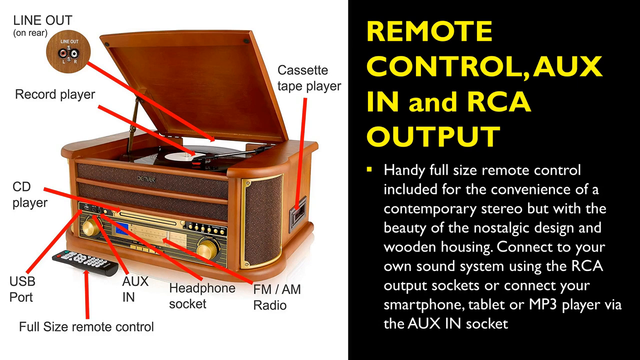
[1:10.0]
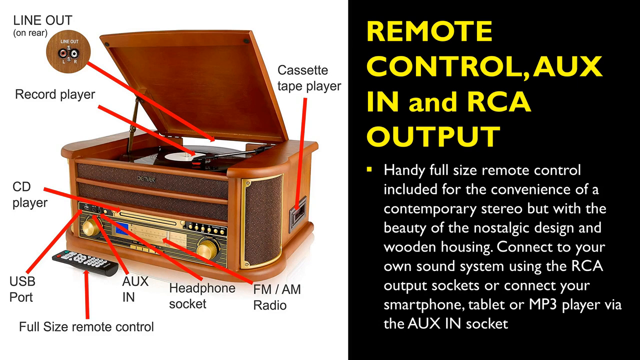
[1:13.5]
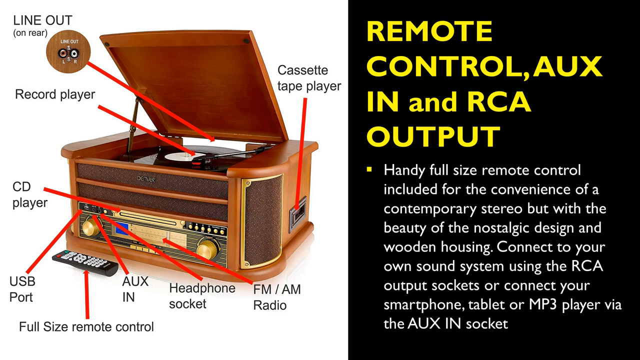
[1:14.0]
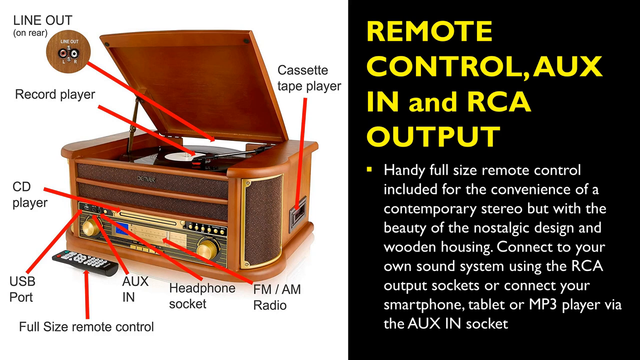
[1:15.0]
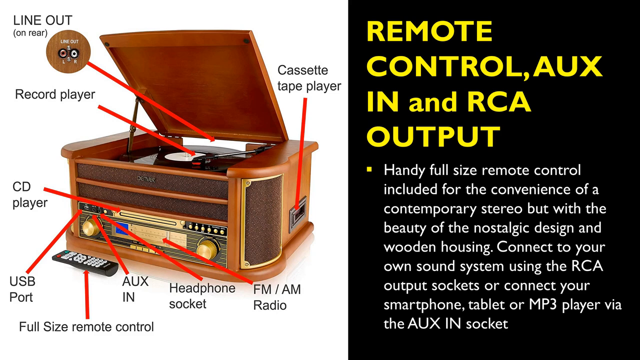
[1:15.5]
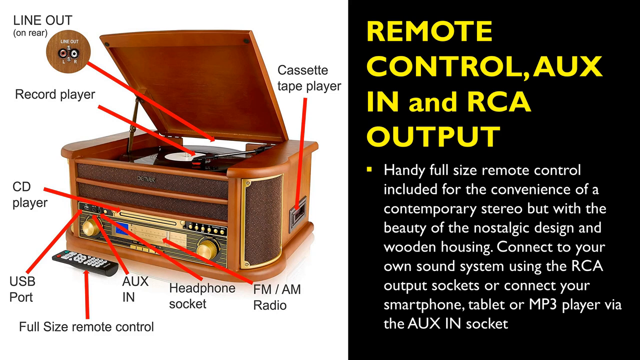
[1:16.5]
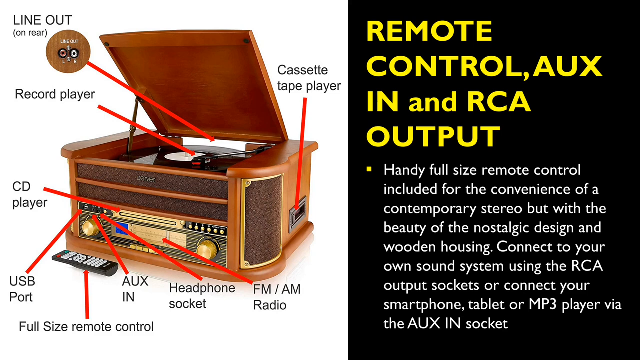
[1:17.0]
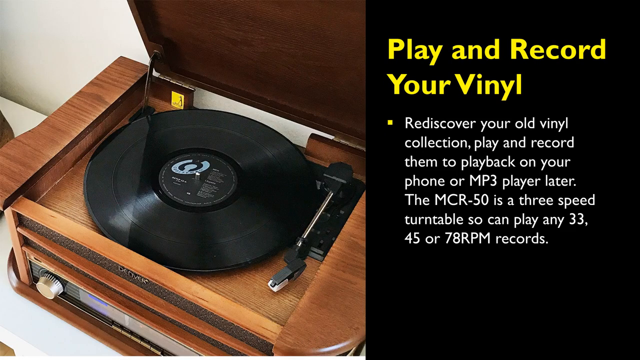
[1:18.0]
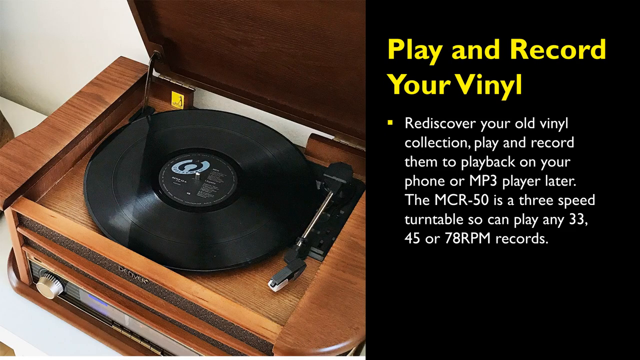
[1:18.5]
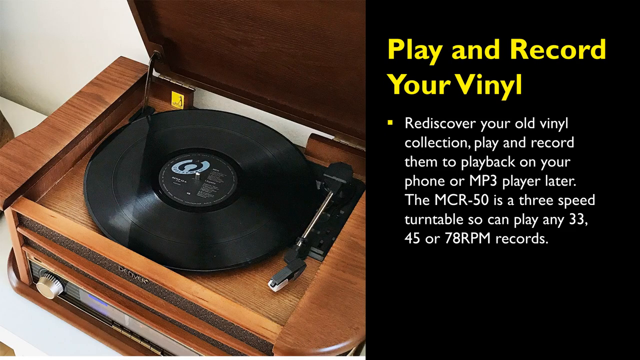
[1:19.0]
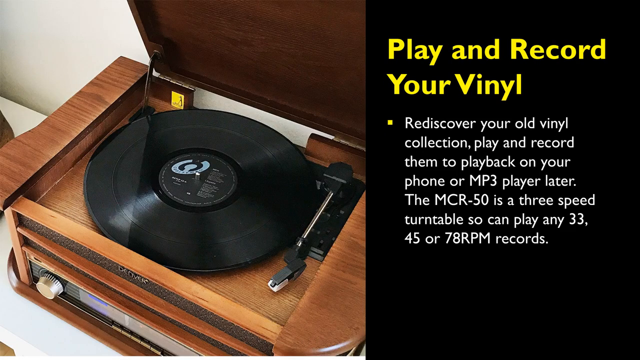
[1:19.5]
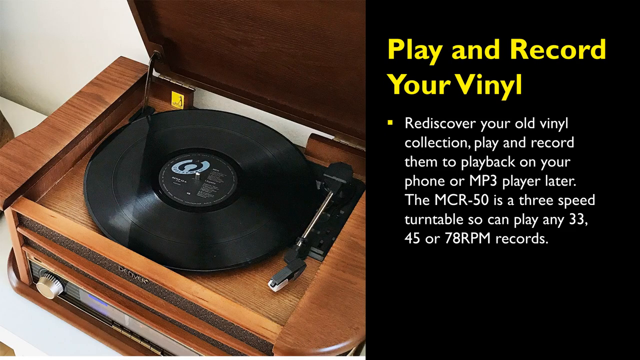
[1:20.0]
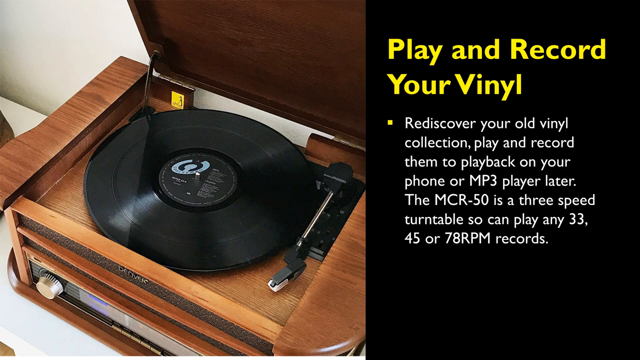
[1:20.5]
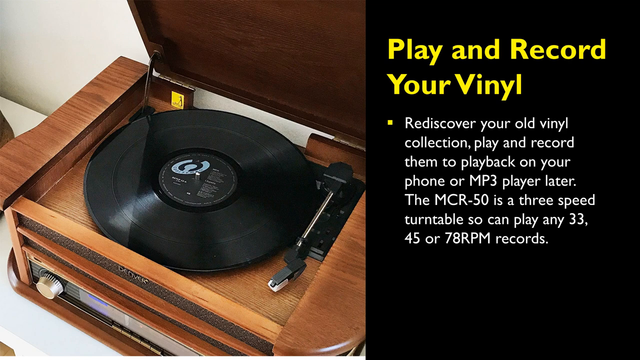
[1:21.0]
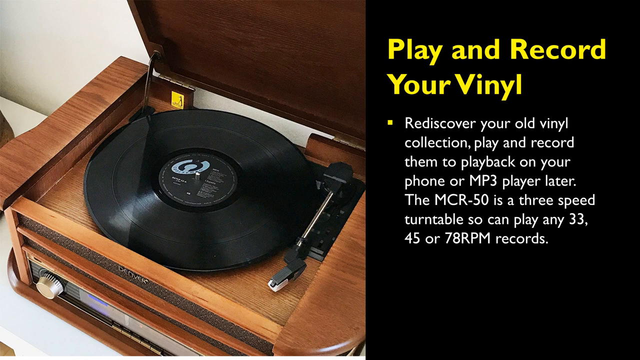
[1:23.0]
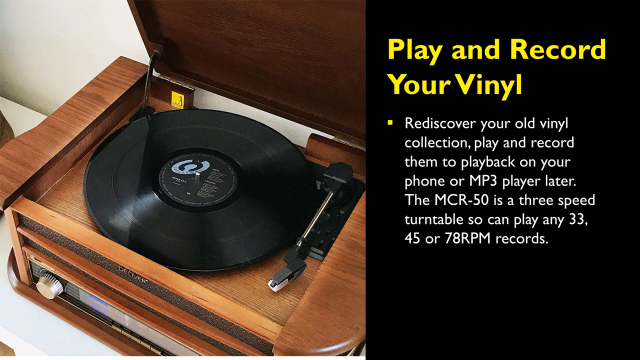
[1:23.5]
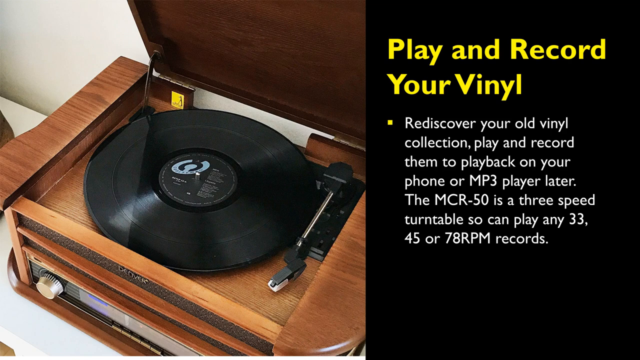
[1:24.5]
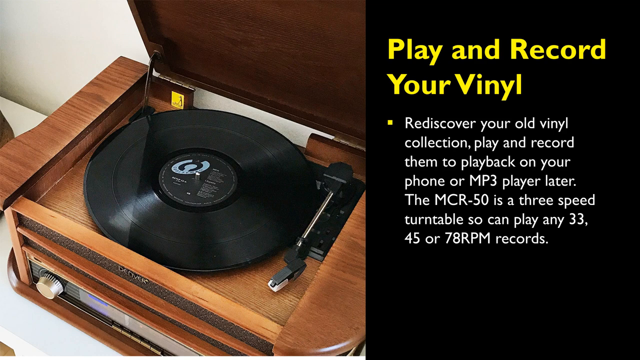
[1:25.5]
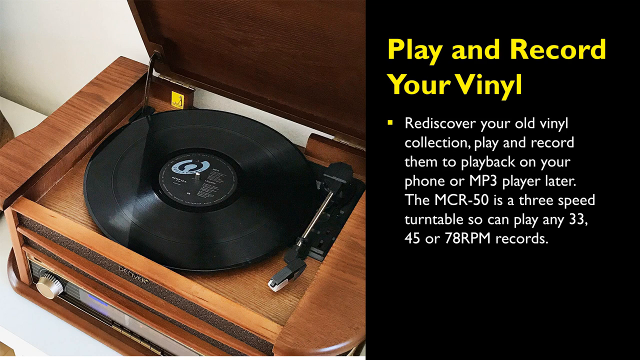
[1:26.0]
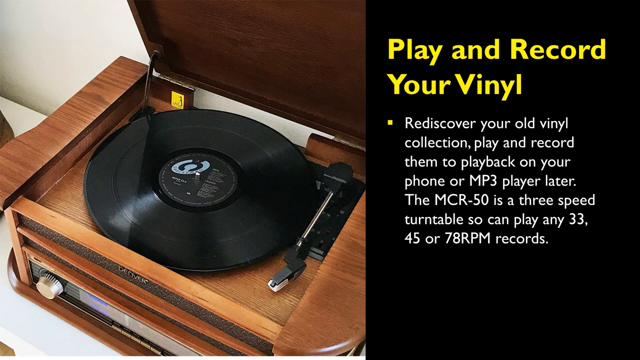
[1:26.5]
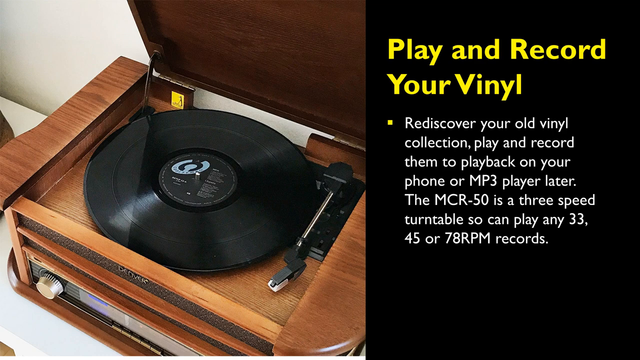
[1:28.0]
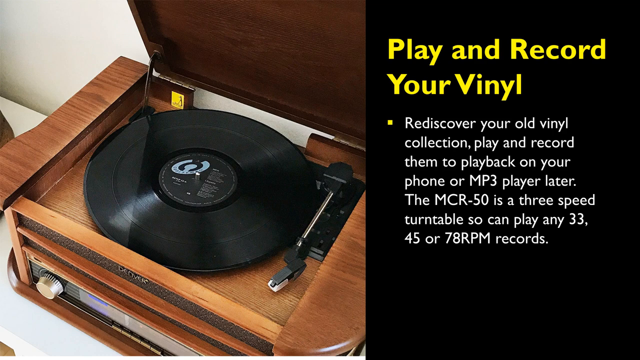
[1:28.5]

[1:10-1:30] Text reads "handy full-size remote control included for convenience of contemporary stereo, but with the beauty of nostalgic design and wooden housing. Connect to your own sound system using RCA output sockets or connect to a smartphone, tablet, or MP3 player." An image of the product has pointers to its different parts: the player on the left side, the USB port at the bottom, the headphone socket, and "FM/AM radio" labeled in the bottom right-hand corner. The slide then changes to yellow text reading "play and record your vinyl" and white text reading "rediscover your old vinyl collection, play it, and record them to play back on your phone or MP3 player later. The MCR-50 is a three-speed turntable", able to play 33, 45 or 78 RPM records. On the left-hand side is an image showing where the record goes, with a record in it.